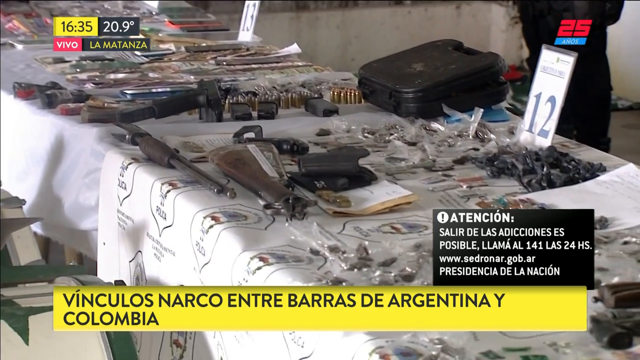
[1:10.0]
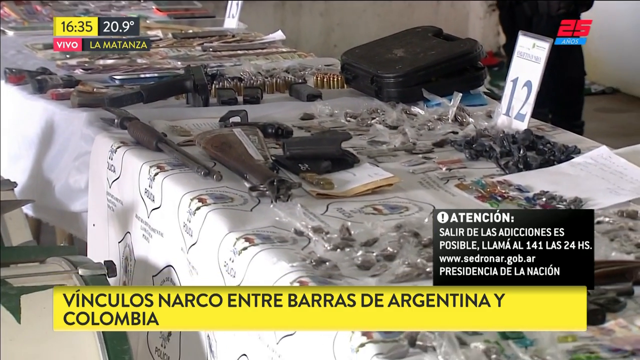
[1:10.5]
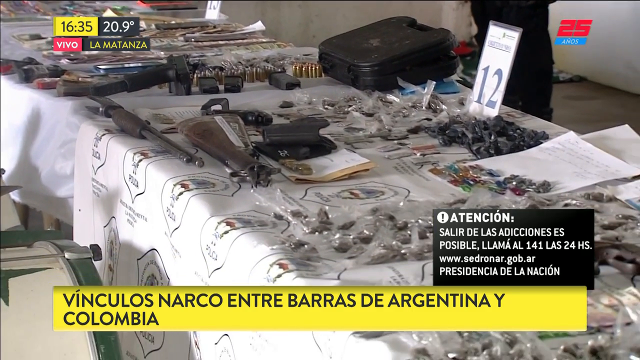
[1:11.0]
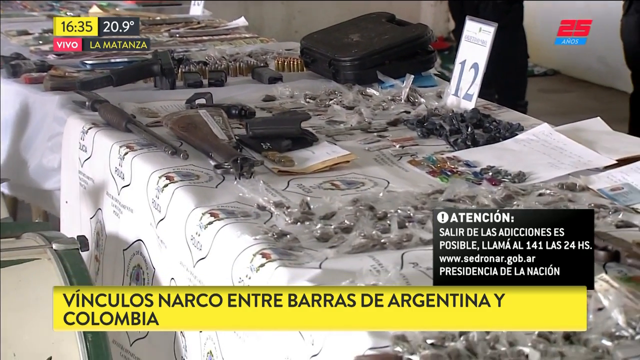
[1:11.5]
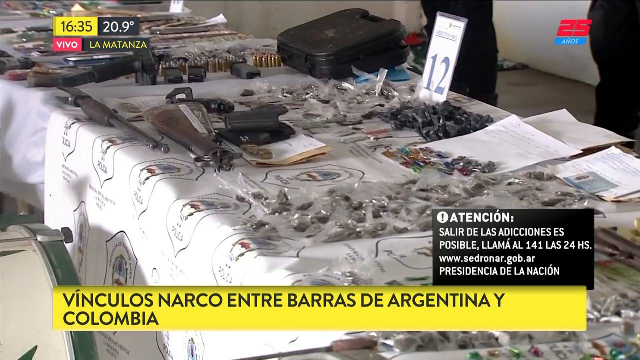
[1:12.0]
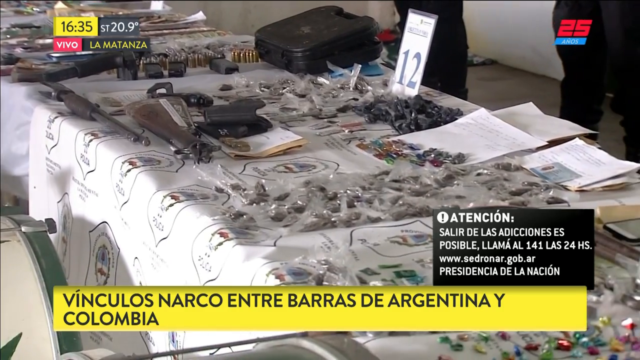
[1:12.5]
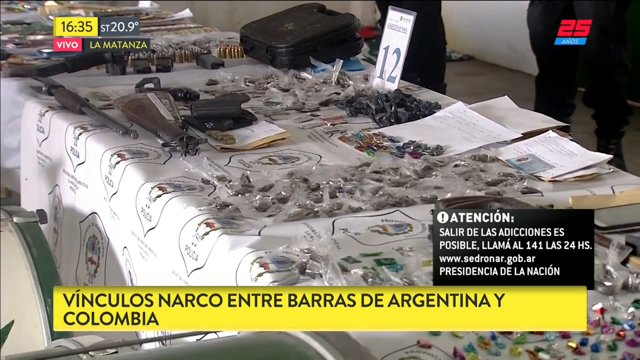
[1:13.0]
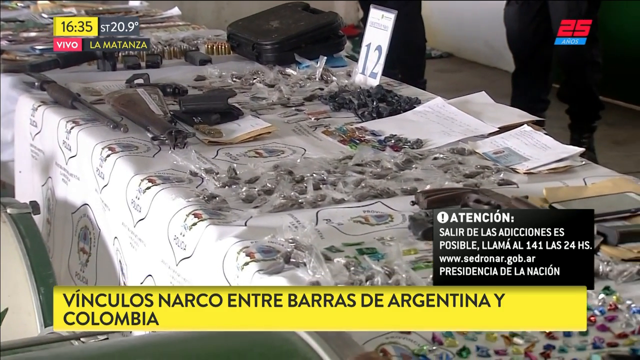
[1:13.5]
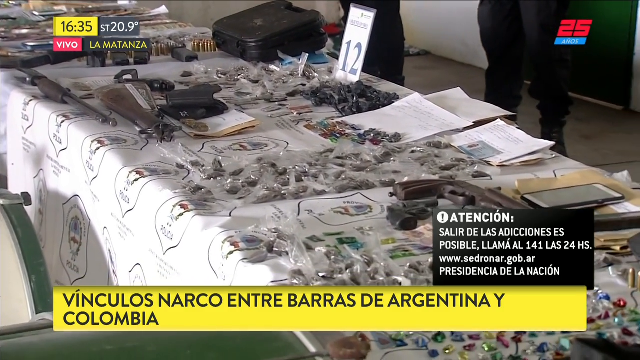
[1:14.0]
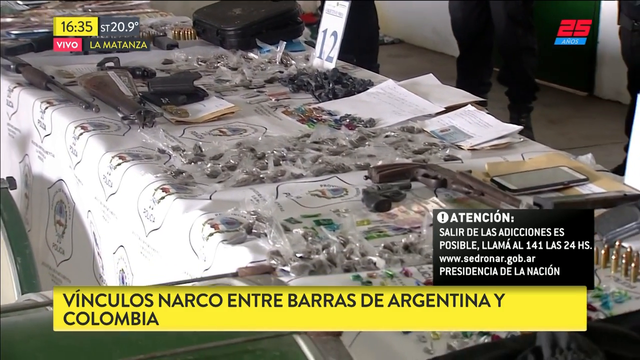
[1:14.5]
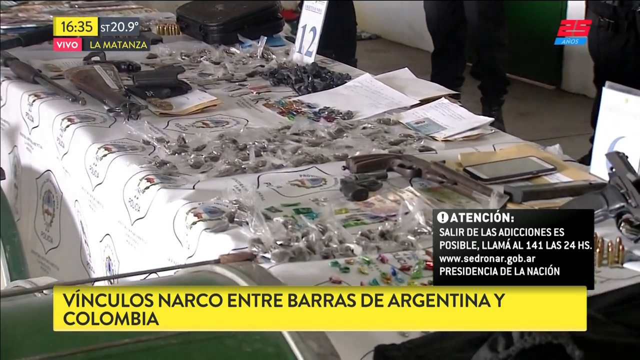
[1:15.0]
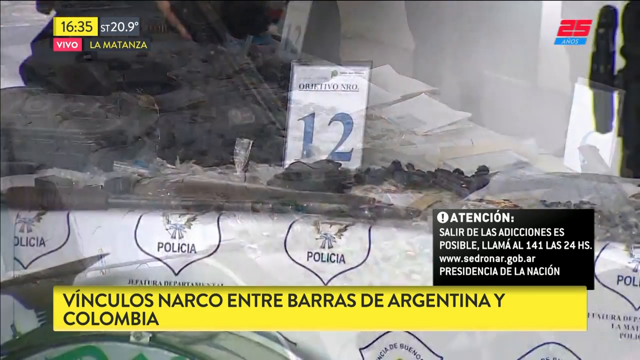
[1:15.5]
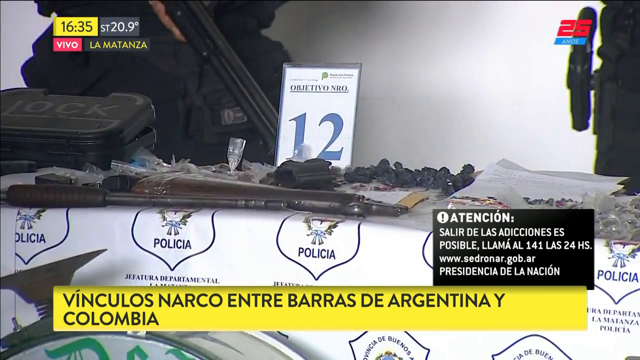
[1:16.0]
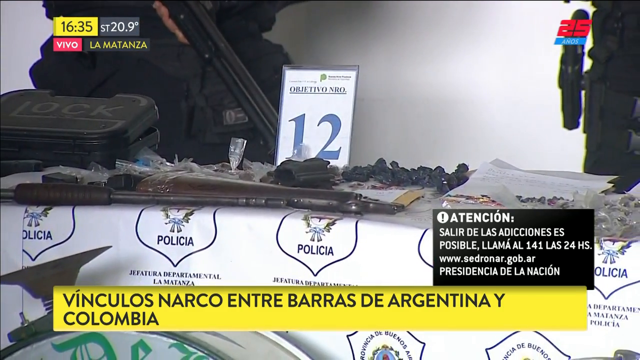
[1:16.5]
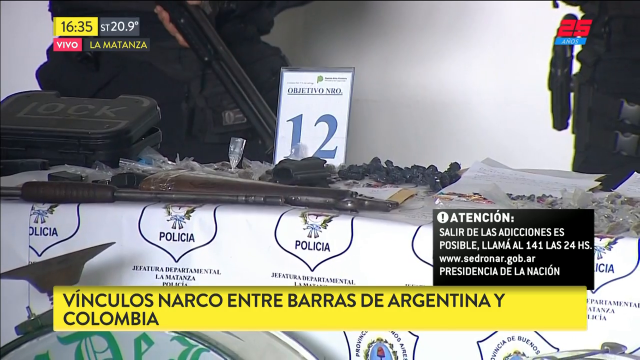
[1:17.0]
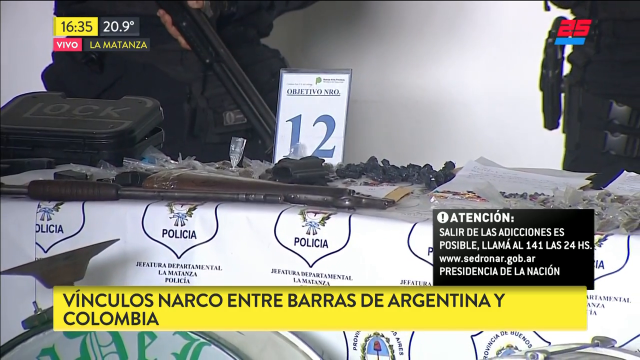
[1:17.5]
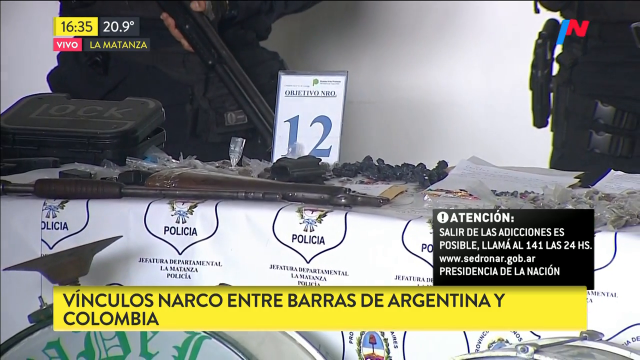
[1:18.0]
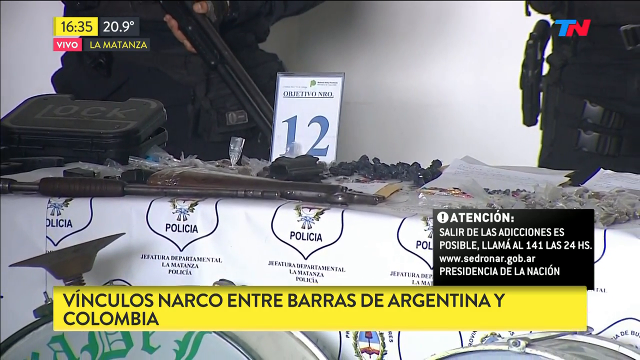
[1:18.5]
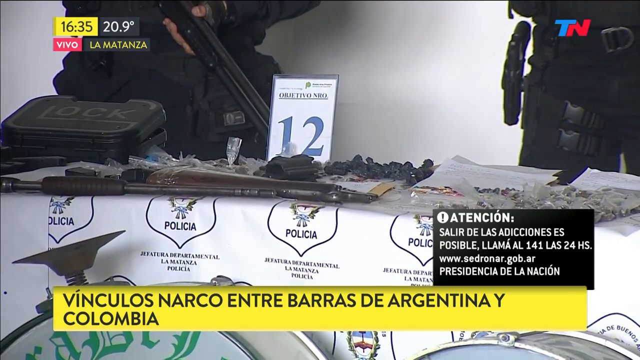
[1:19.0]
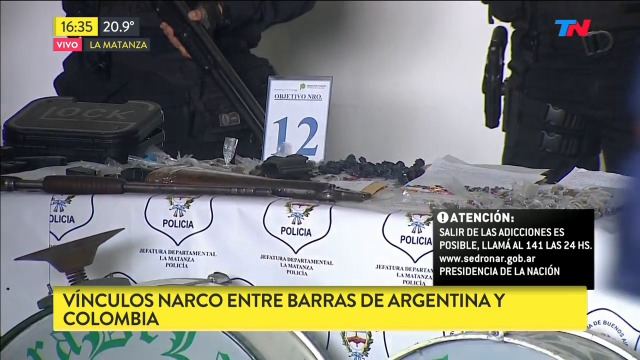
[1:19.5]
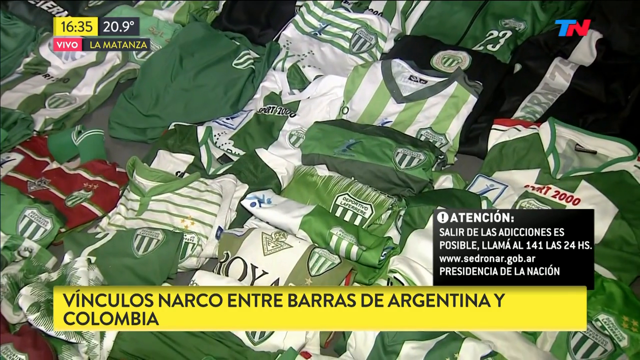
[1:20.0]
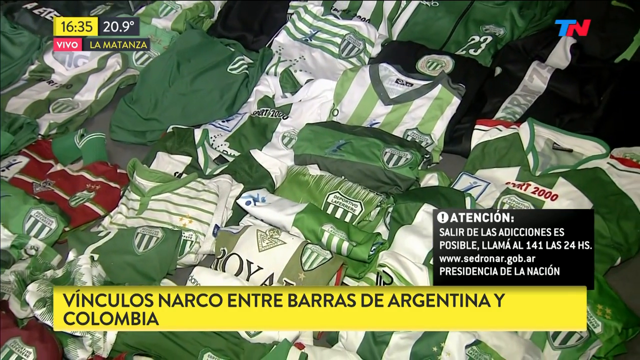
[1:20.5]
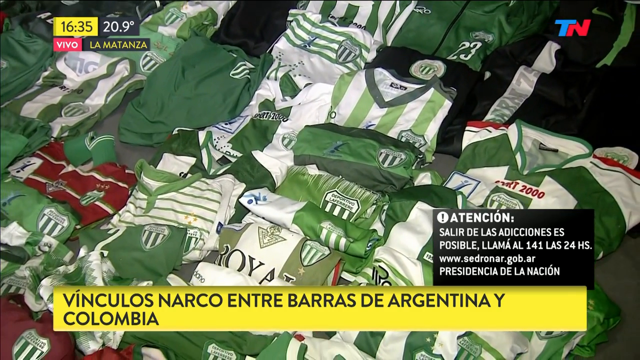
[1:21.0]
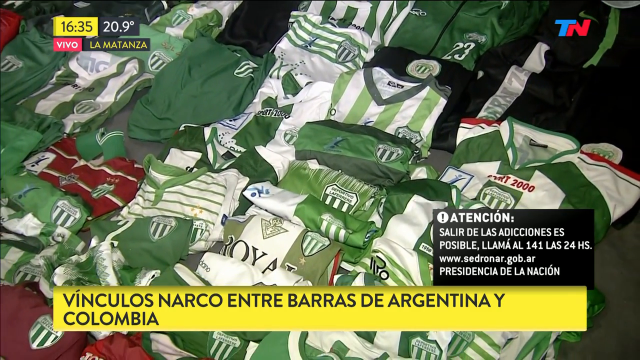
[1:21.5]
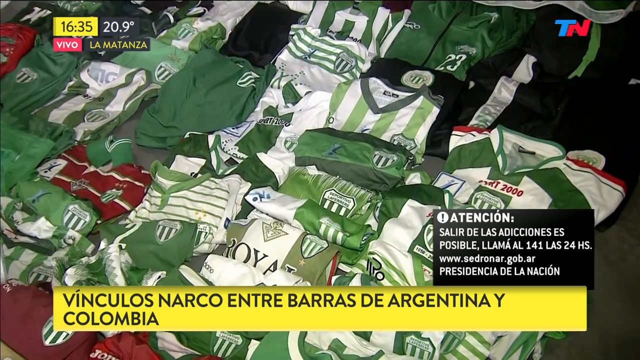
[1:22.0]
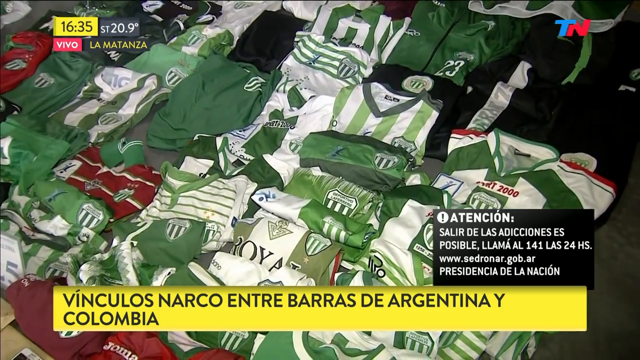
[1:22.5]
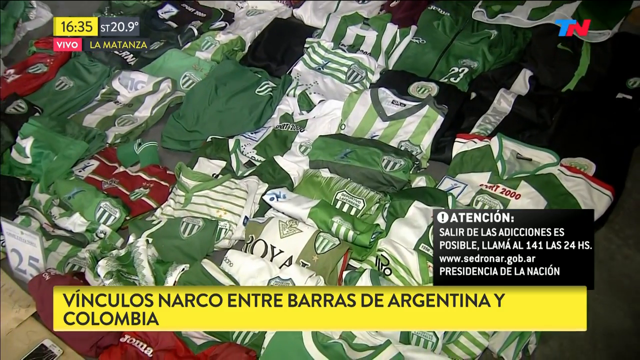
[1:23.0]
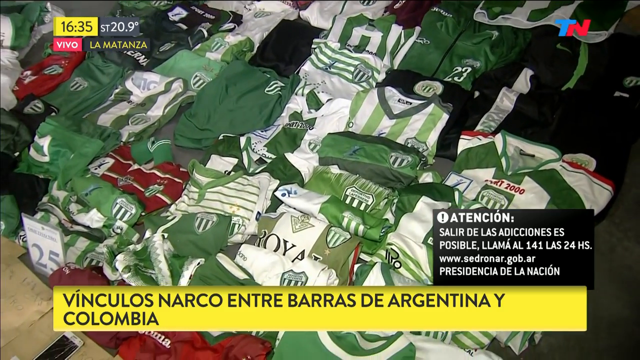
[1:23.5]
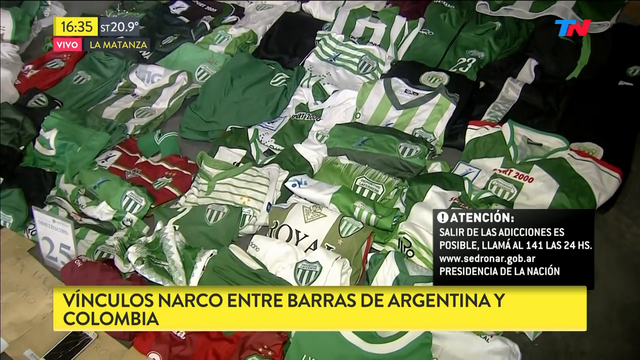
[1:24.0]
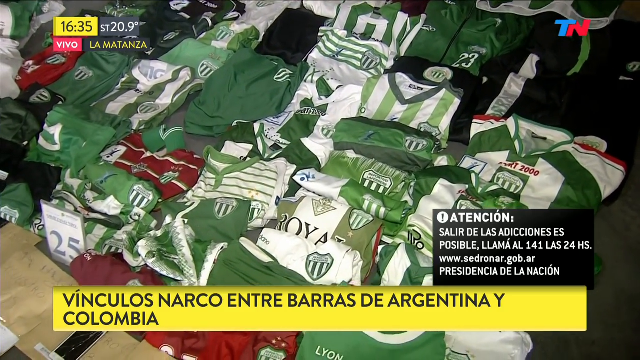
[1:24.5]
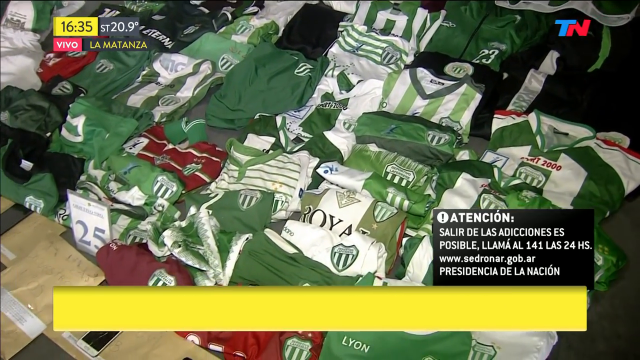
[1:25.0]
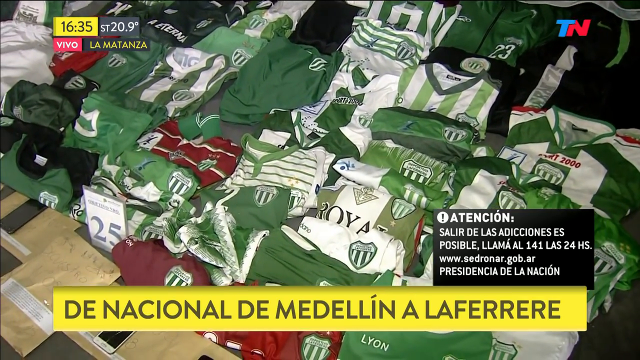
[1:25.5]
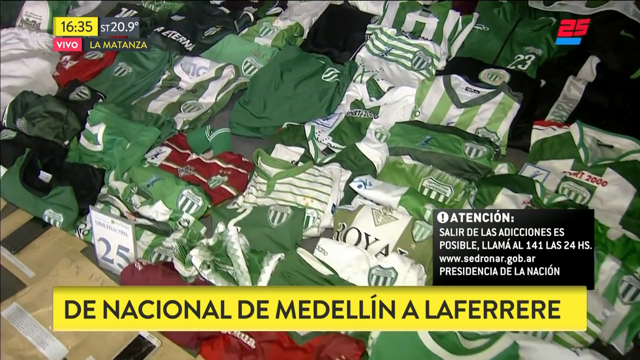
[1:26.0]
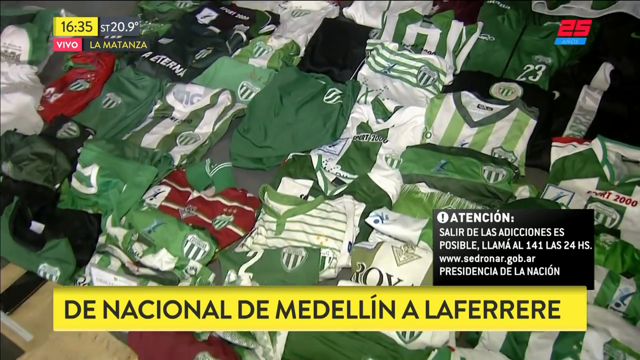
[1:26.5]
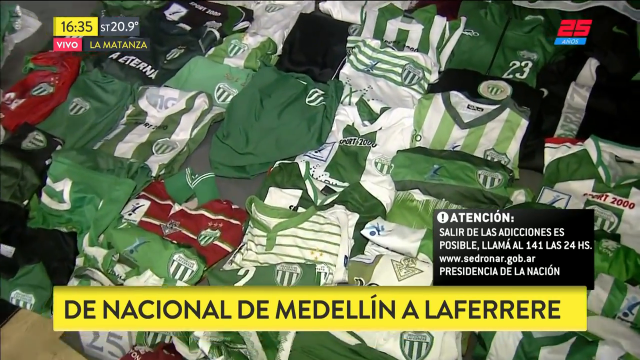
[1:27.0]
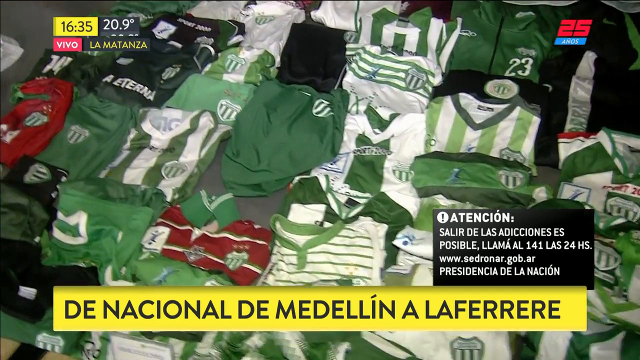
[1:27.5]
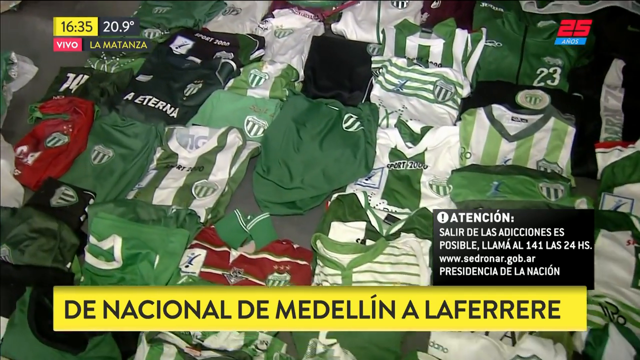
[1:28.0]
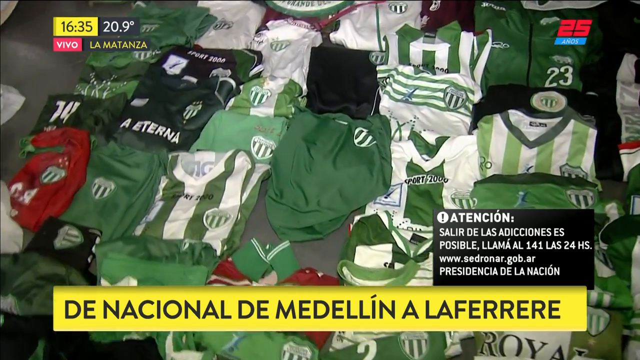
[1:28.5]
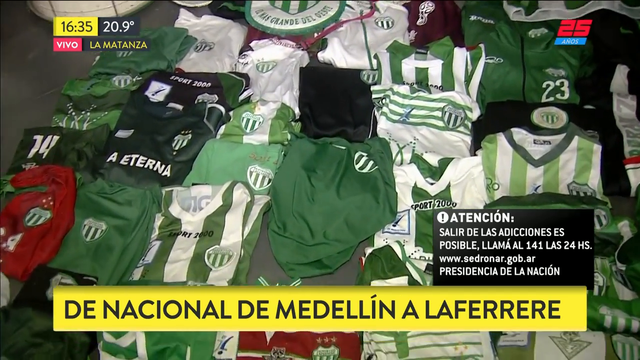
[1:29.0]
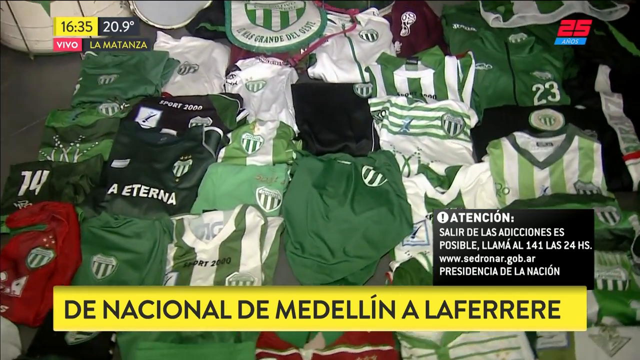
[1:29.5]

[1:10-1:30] A close-up shows the things on the table. The surface is cluttered with magazines and even sticks, and one item is marked with the number 12 in bold blue. The table has a cloth cover printed repeatedly with a word. Paper, black bags and metallic objects are scattered across it. The video then shifts to another table with rows of smaller objects, possibly accessories or personal belongings, brightly lit so their colors can be seen. Later the camera shows numerous folded white striped sports jerseys, folded in almost the same way and with similar colors. White text in the corner still reads "attention". A black clothing item is marked TN in blue and red.